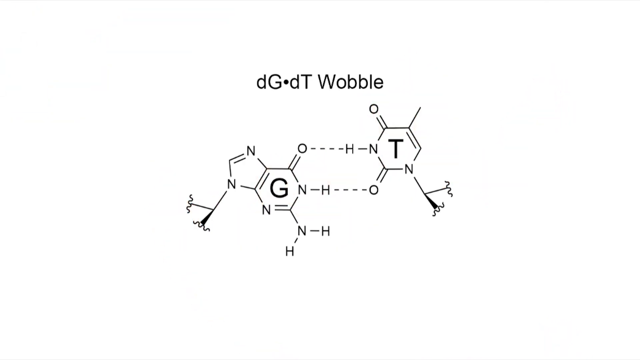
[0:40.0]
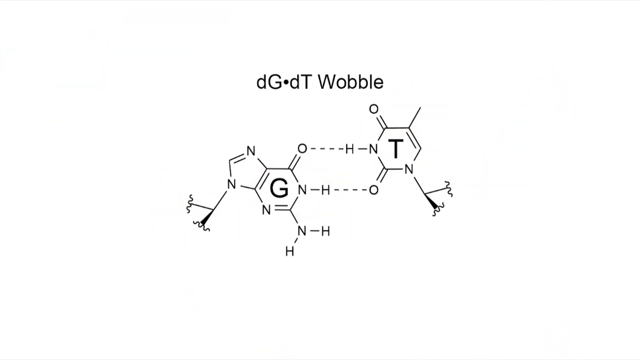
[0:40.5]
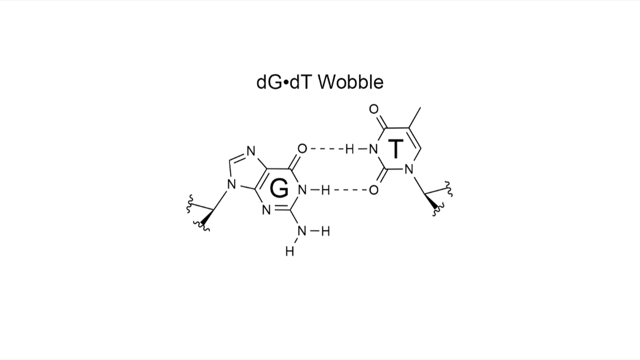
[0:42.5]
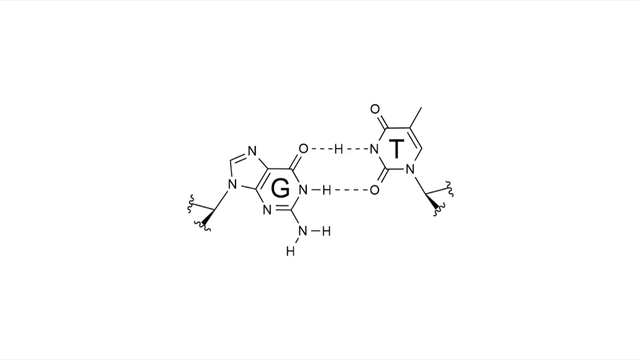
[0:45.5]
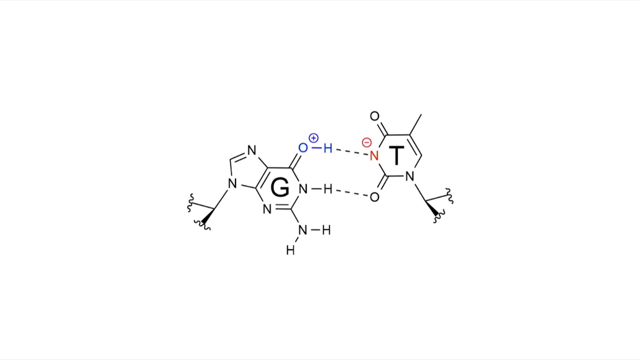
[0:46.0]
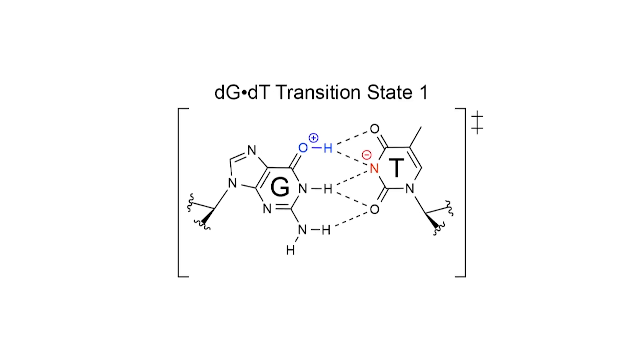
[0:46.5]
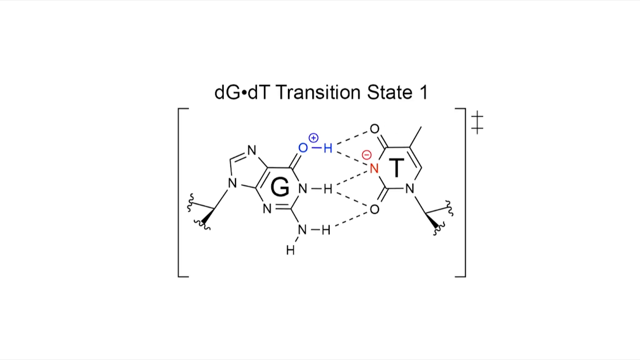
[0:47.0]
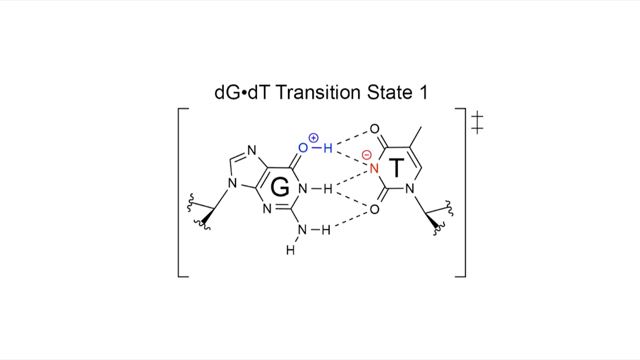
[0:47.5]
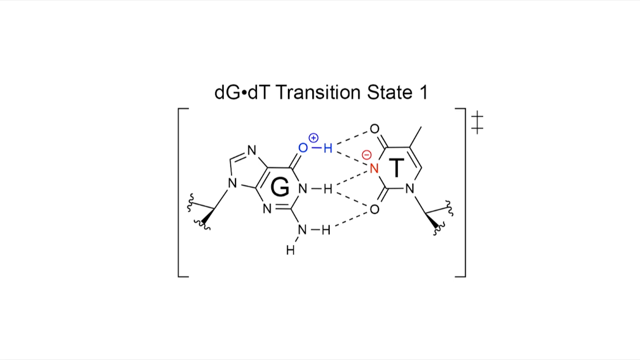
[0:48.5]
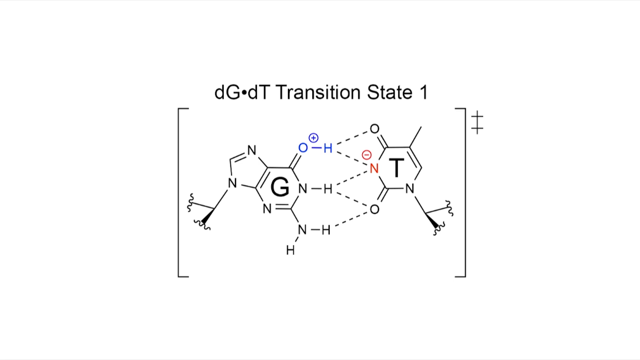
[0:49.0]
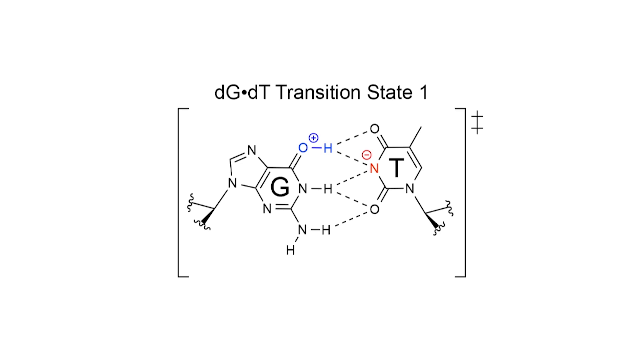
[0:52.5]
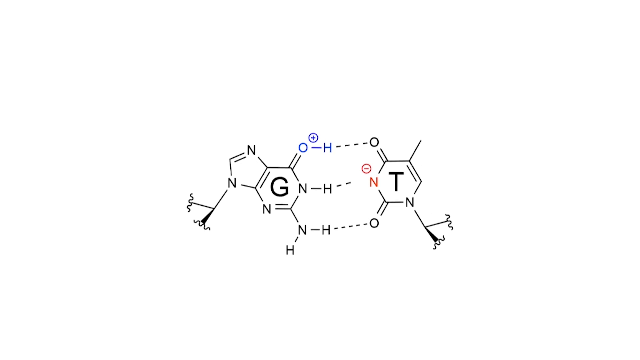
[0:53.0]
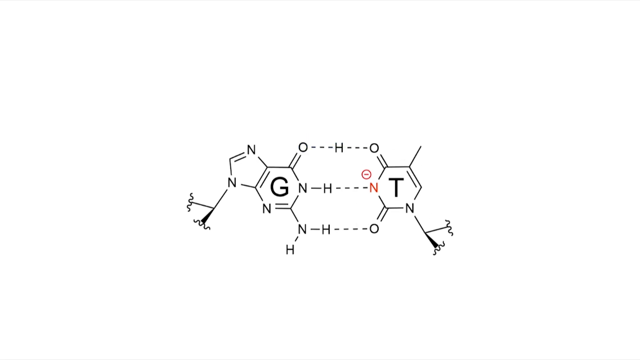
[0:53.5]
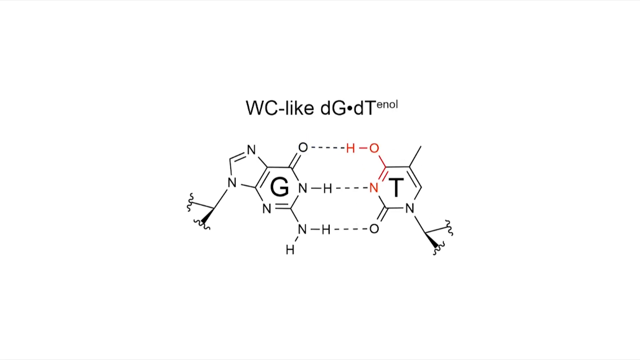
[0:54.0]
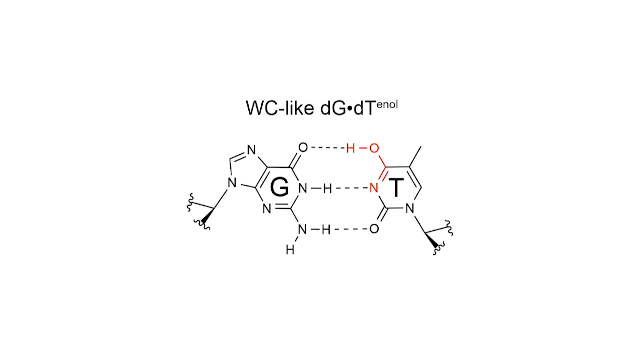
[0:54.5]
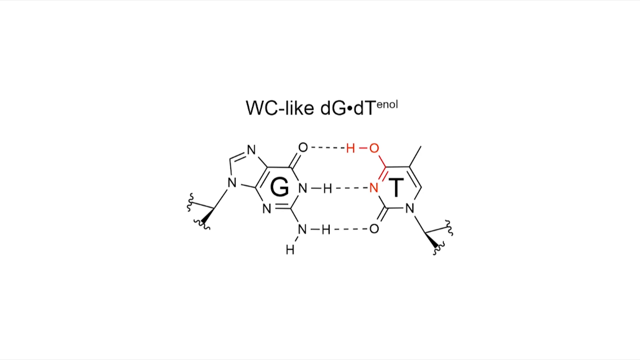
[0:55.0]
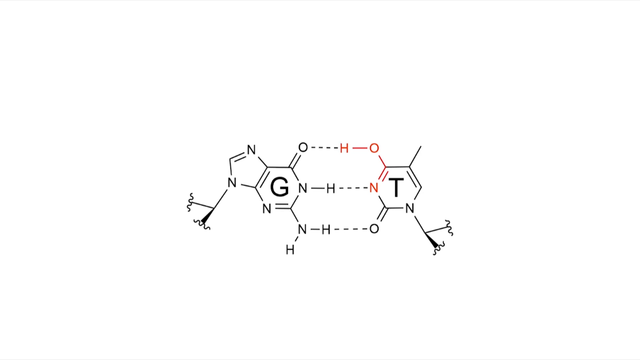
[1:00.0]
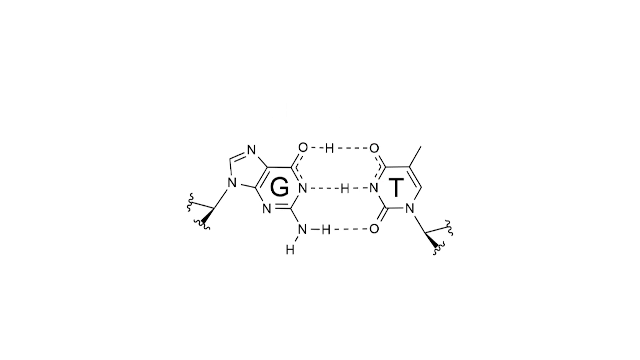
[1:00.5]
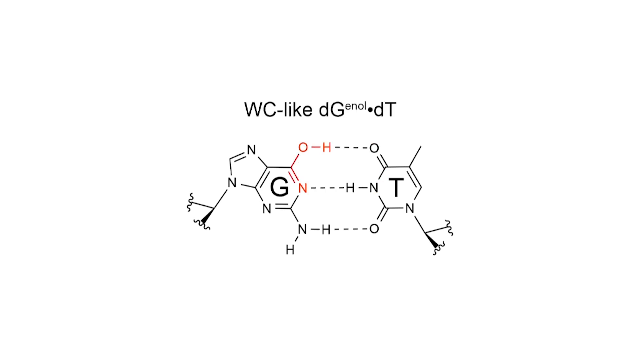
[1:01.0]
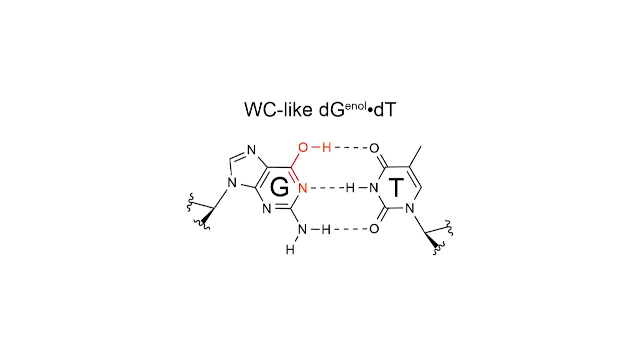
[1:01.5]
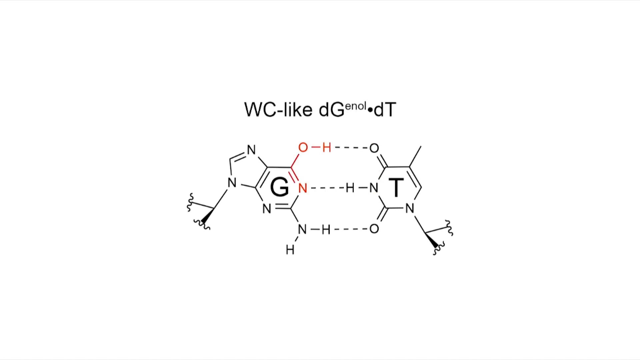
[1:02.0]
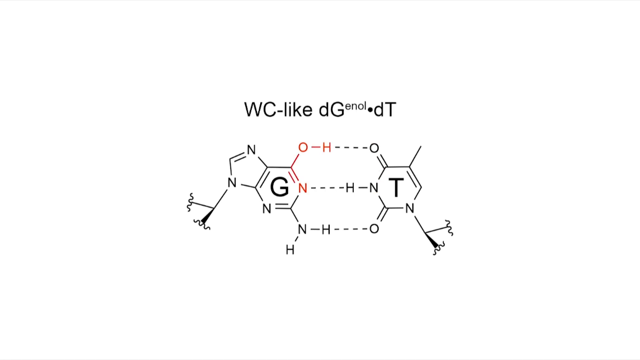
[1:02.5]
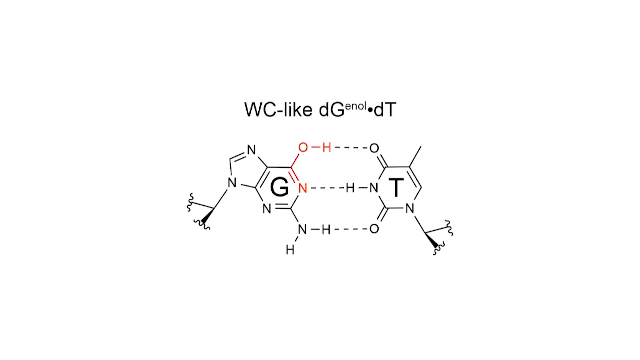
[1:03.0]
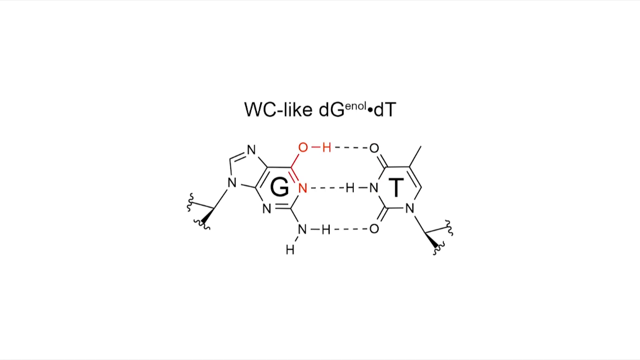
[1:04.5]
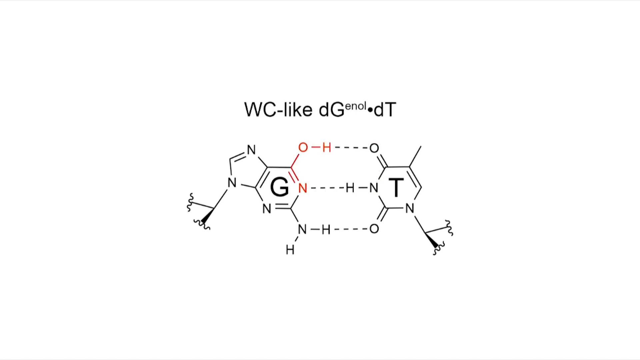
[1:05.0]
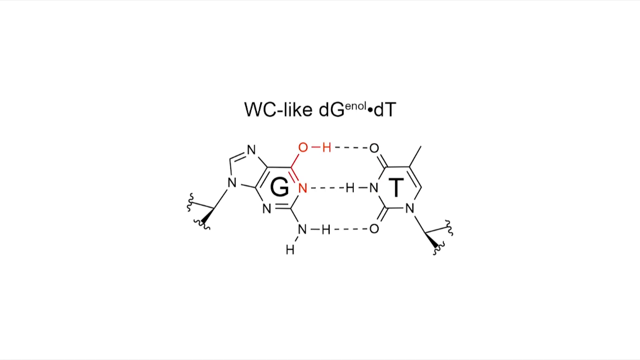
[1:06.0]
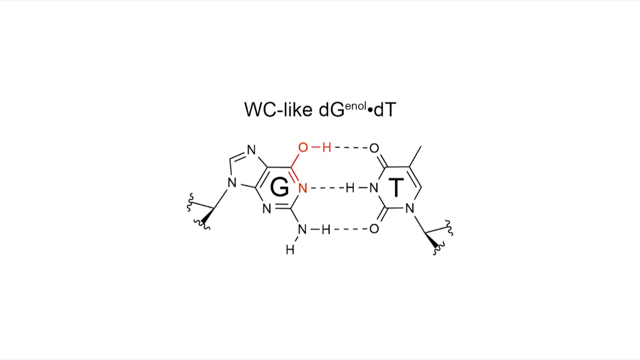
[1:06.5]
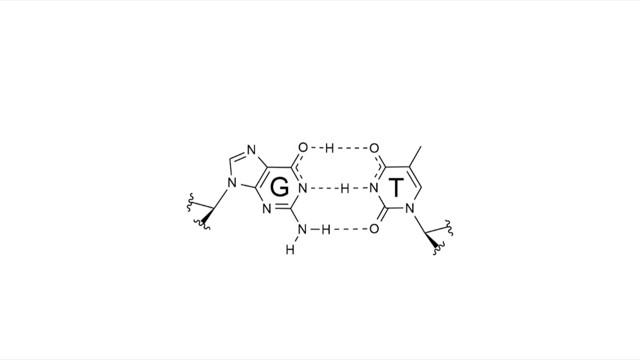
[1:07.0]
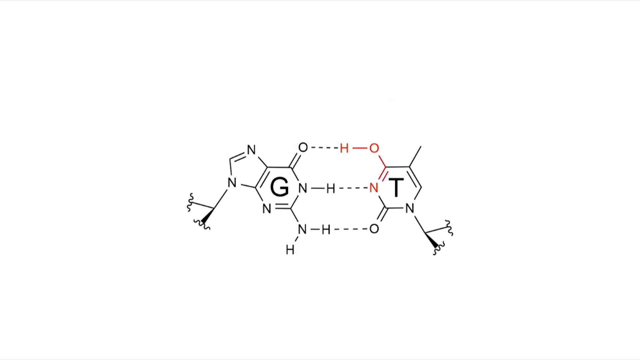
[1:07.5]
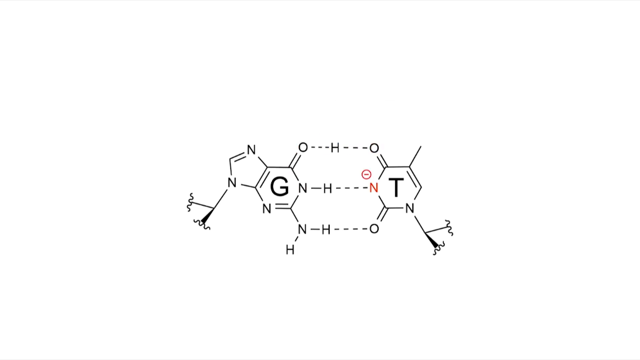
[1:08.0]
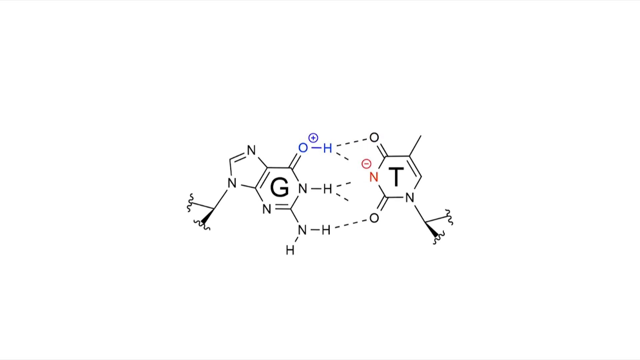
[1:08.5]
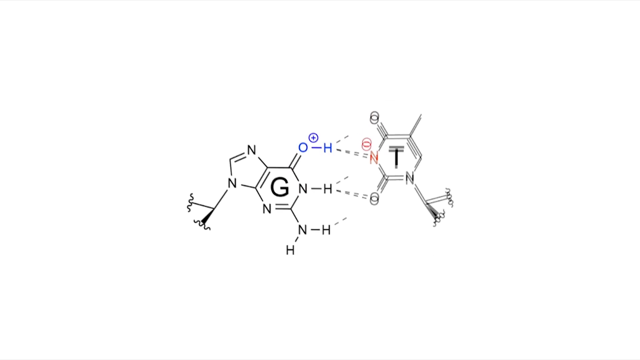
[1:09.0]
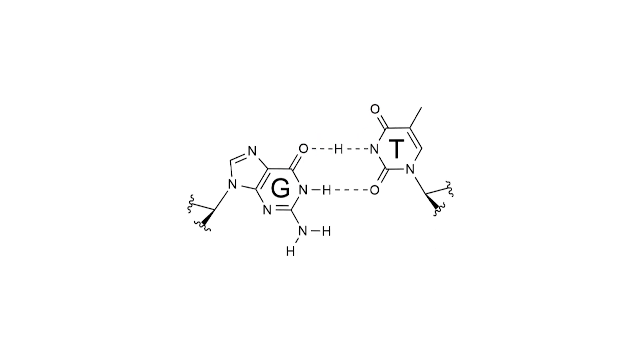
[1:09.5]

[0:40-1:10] The molecular structure contains G and T and is made of nitrogen, hydrogen and oxygen. At the top it says "DG DT wobble". The structure is drawn in black on a white background. It changes into transition state 1, in which elements are connected to different elements, forming a different molecular structure, with OH and an H connected to O. The structure keeps switching through further labelled states, including a dG-dT wobble state, with the elements changing over time. The electrolyte also changes, with positives and negatives shifting from positive to negative, negative to positive, or neutral.